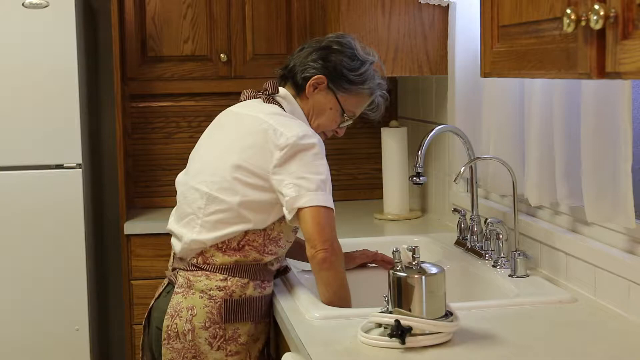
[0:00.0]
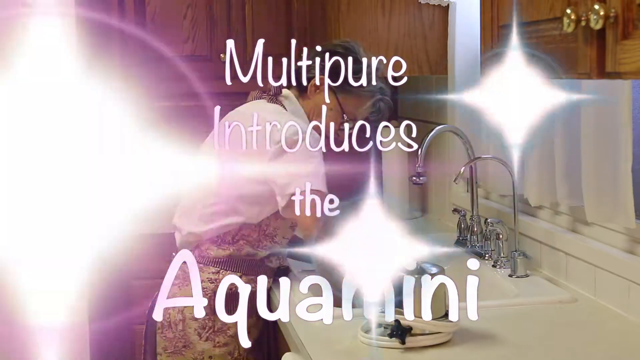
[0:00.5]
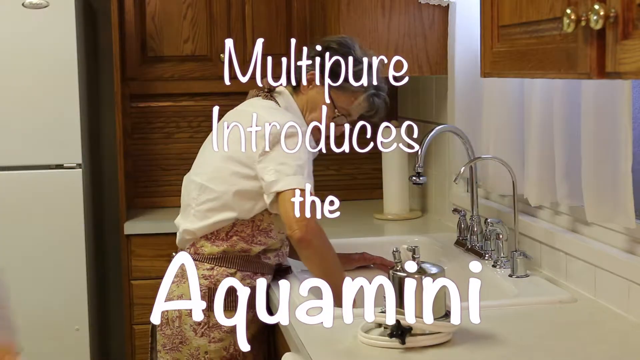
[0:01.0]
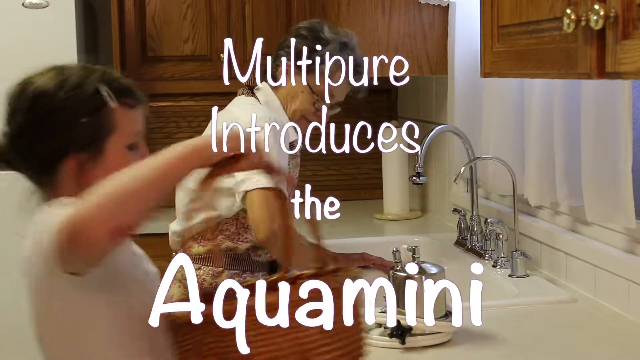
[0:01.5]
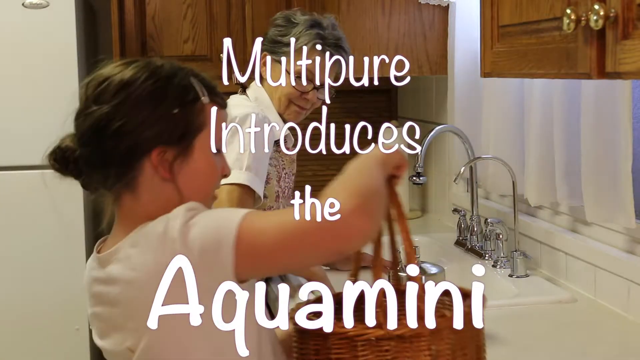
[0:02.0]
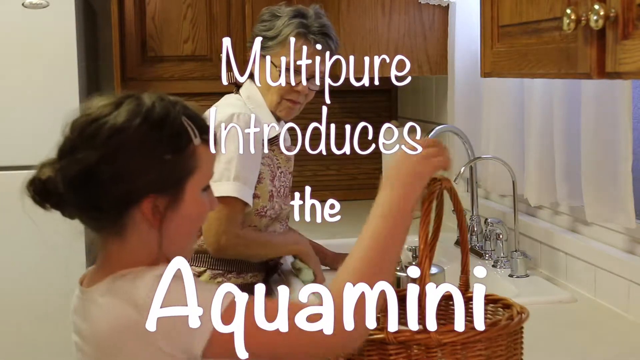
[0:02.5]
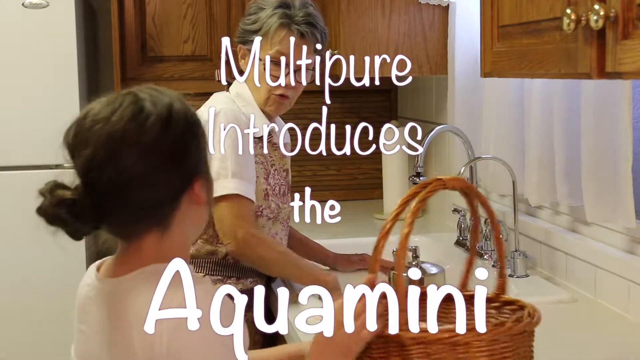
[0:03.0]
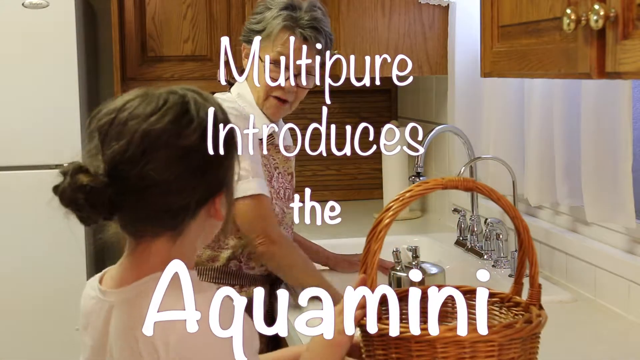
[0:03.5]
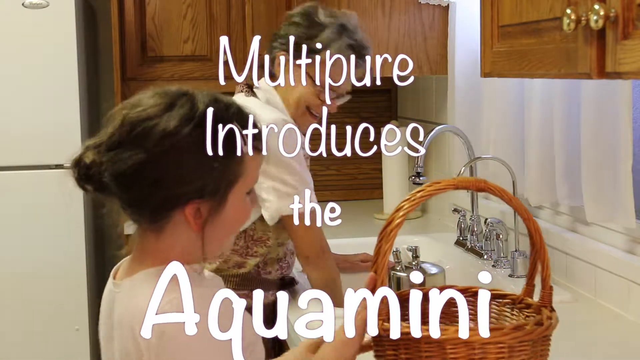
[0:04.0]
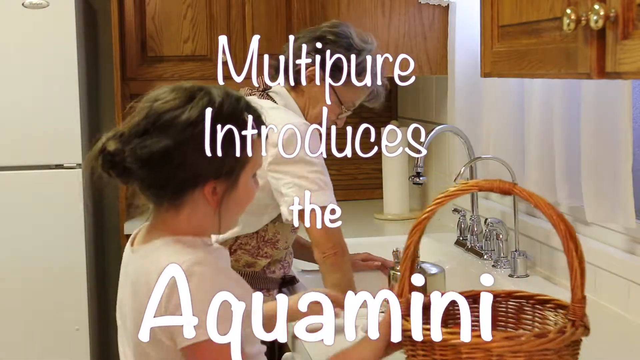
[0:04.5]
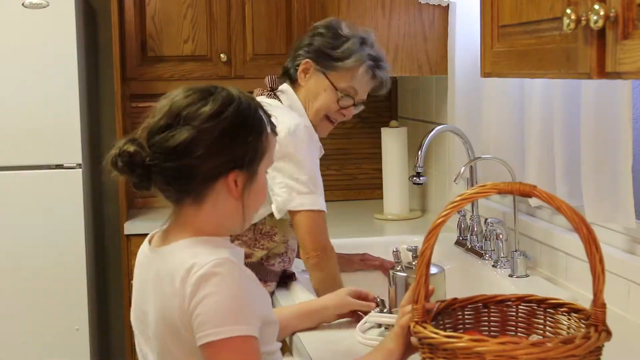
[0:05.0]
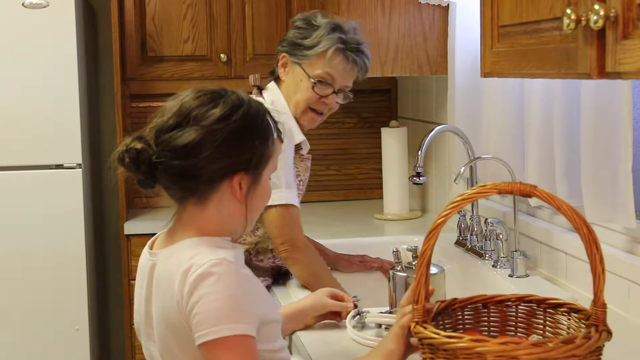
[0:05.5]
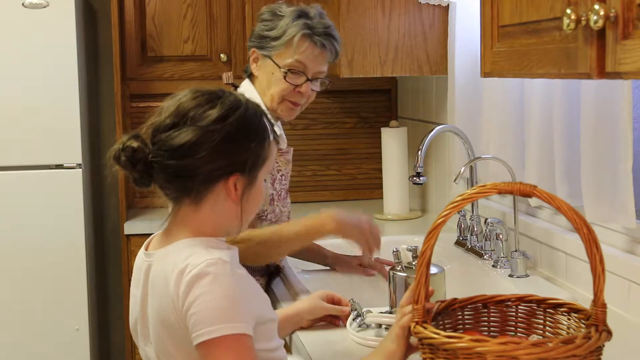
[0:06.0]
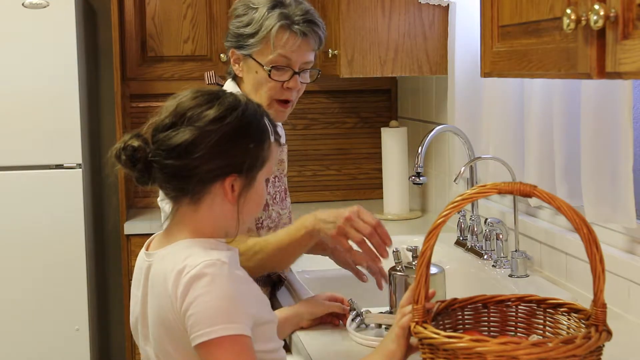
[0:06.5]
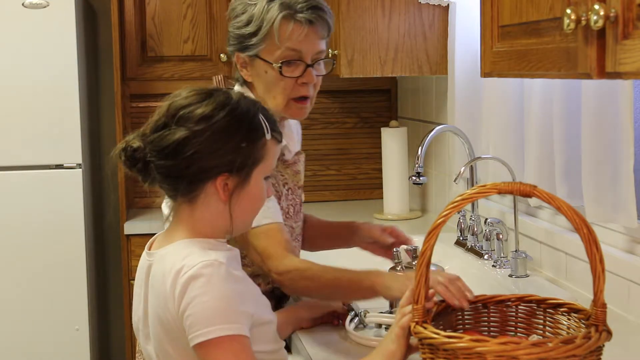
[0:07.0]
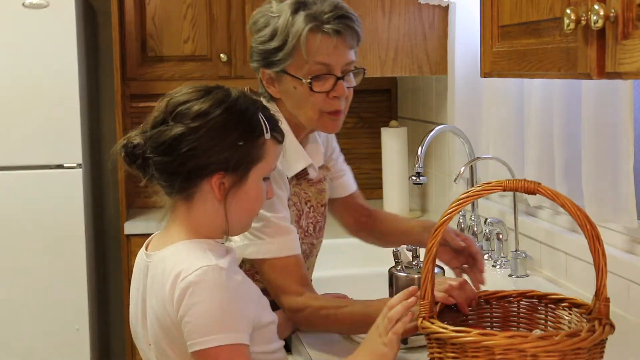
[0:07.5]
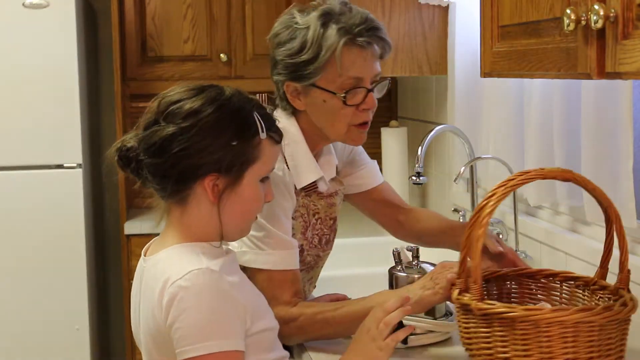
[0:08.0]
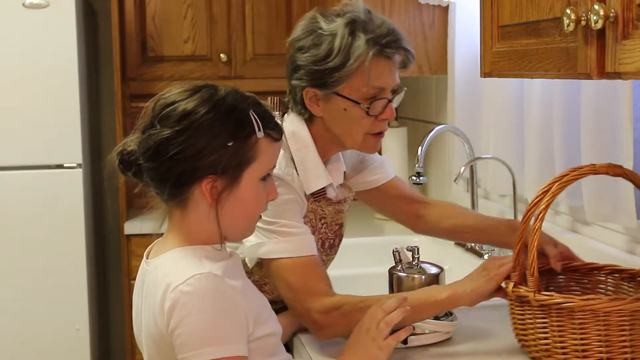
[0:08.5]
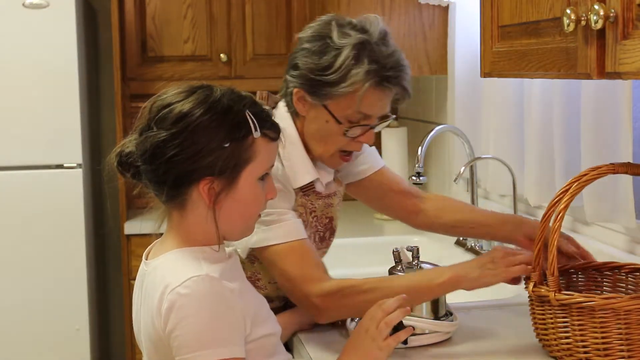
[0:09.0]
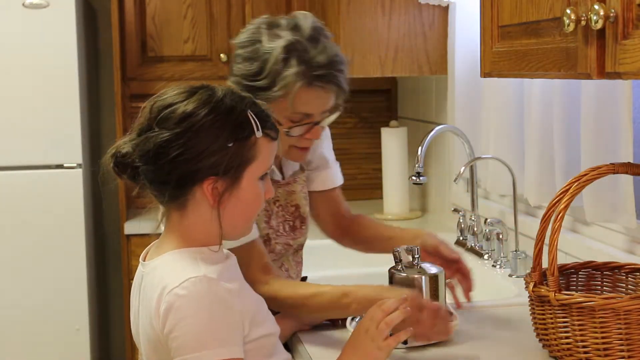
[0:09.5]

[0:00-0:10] A woman stands in her kitchen doing something at the kitchen sink. Her right hand reaches down into the sink while she supports herself with her left hand, and she looks down into the sink. She has gray hair and wears glasses, a white shirt, and a decorative colored apron tied around her waist and neck. She is a middle-aged or older woman, and only her side profile is shown.